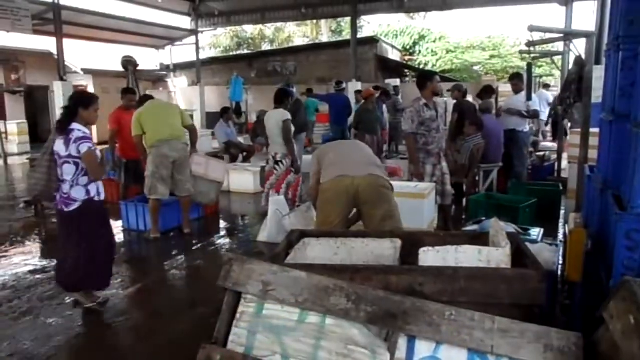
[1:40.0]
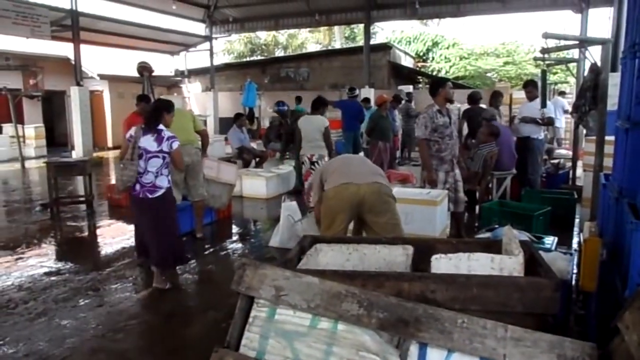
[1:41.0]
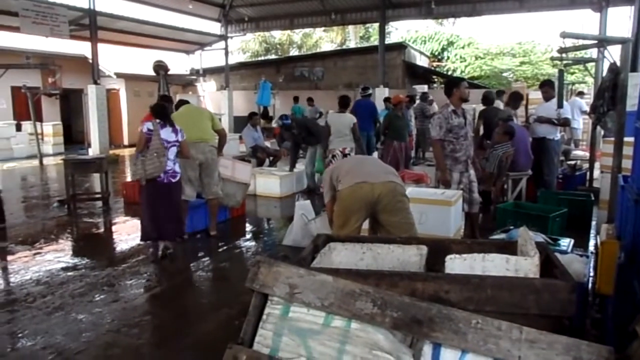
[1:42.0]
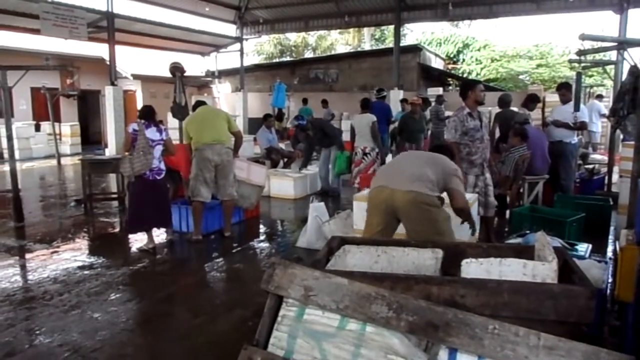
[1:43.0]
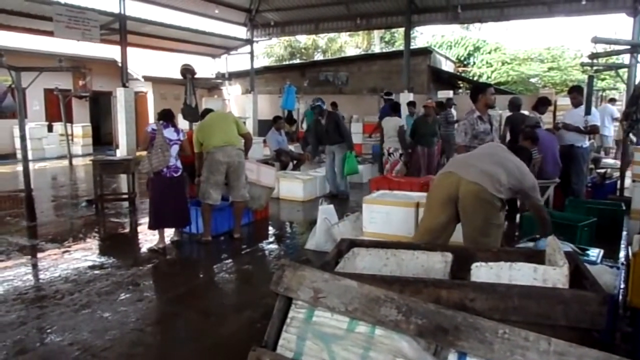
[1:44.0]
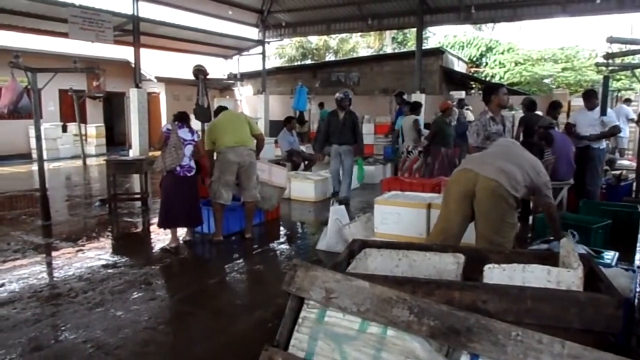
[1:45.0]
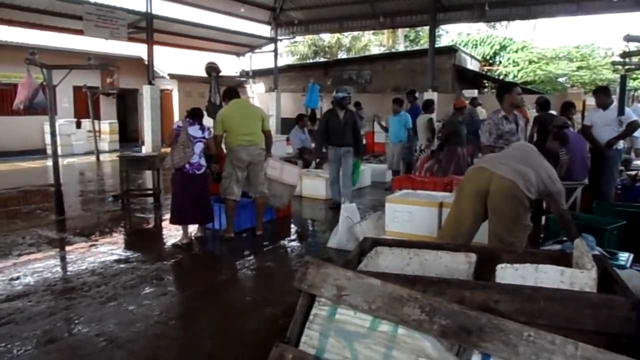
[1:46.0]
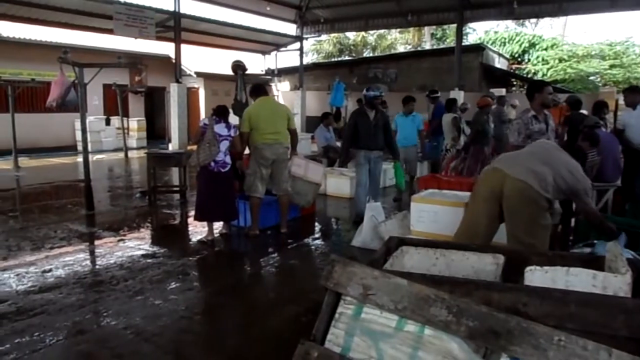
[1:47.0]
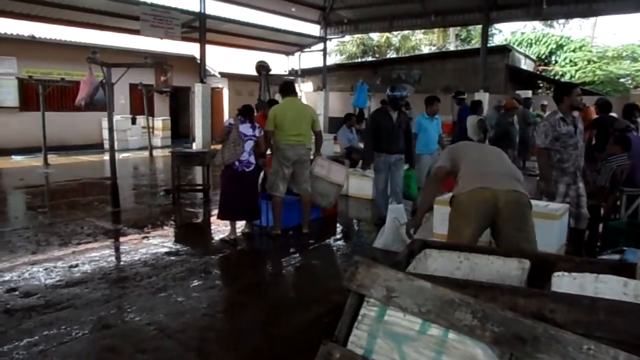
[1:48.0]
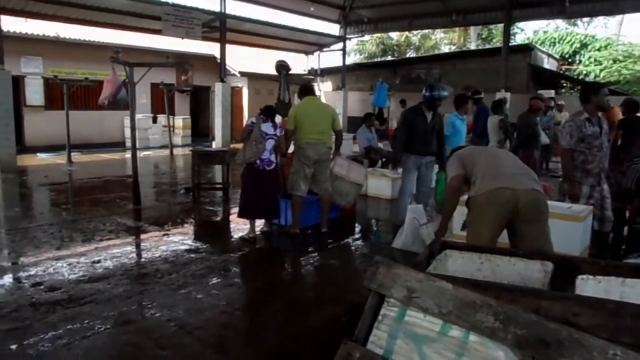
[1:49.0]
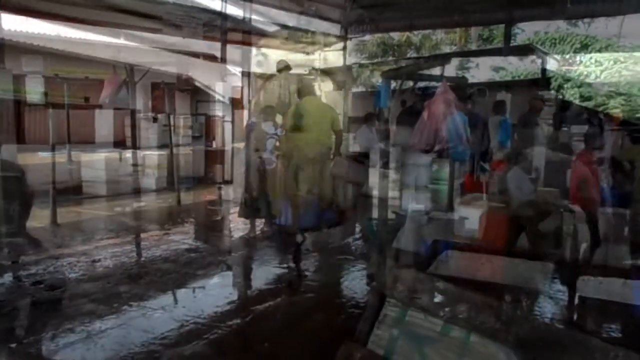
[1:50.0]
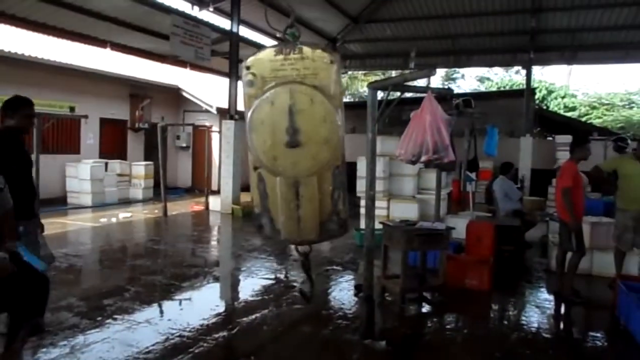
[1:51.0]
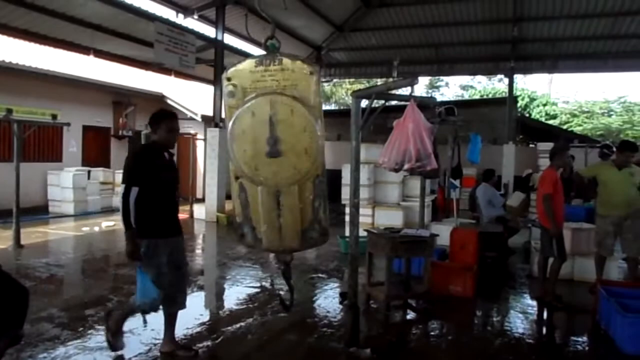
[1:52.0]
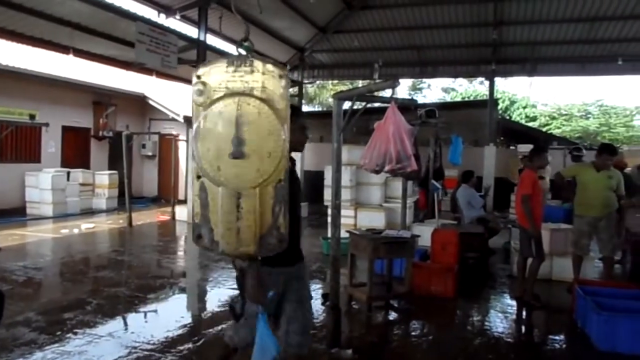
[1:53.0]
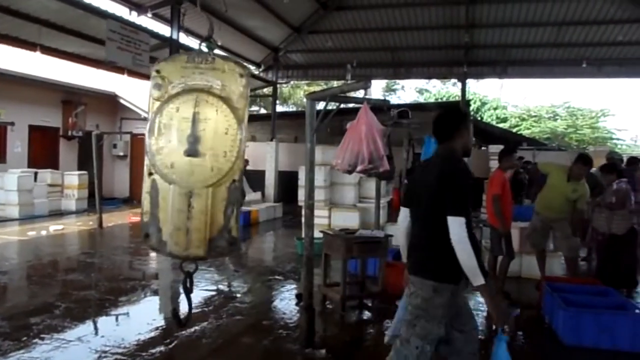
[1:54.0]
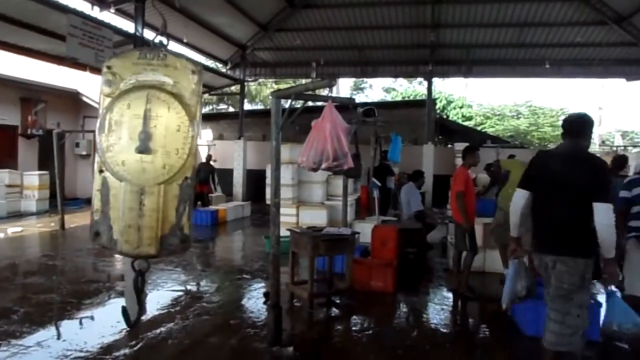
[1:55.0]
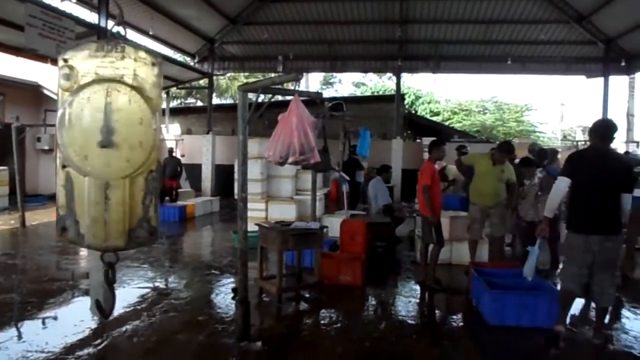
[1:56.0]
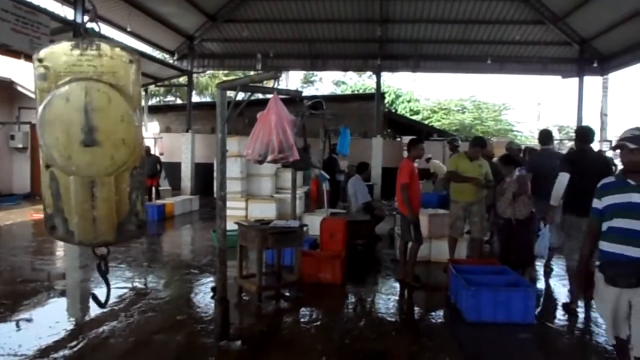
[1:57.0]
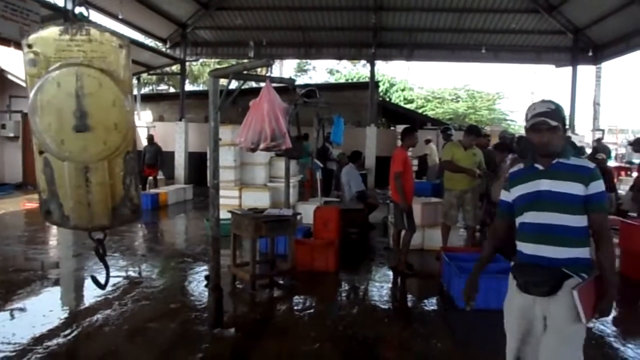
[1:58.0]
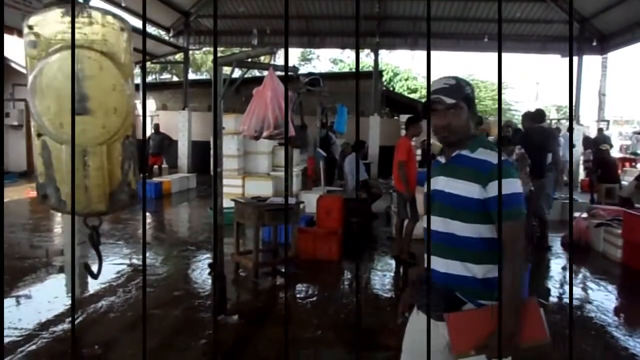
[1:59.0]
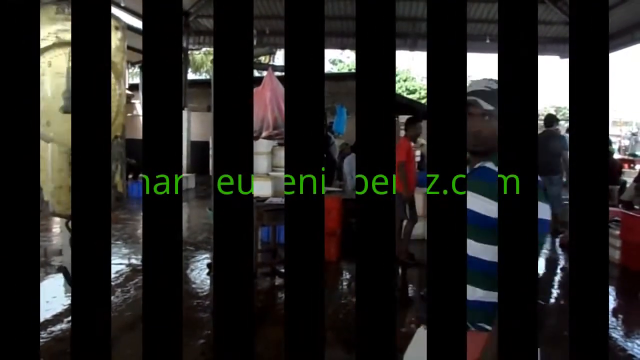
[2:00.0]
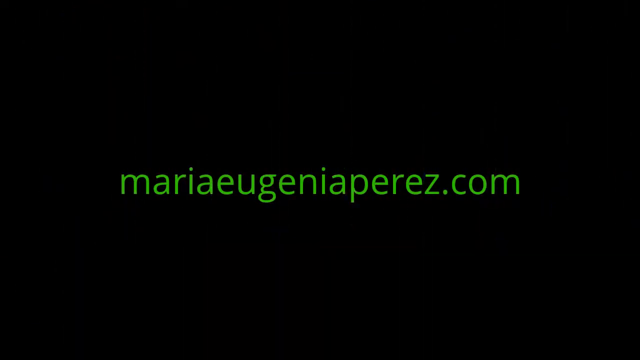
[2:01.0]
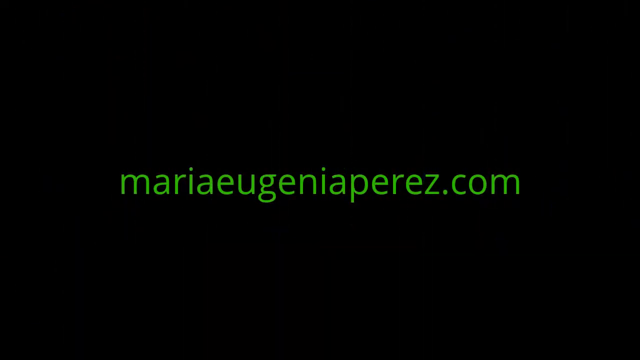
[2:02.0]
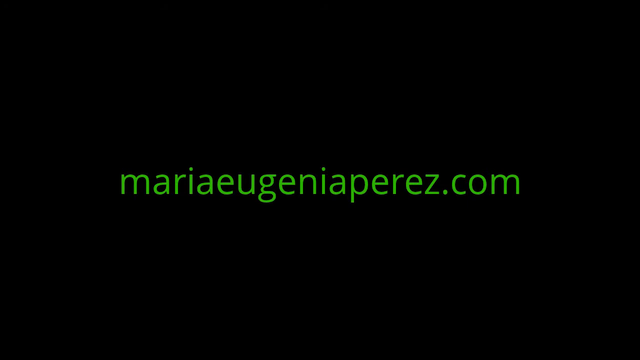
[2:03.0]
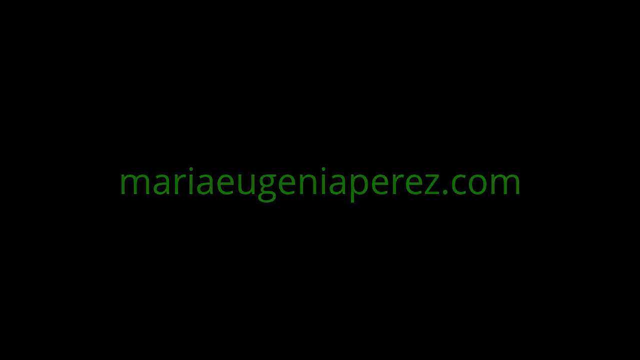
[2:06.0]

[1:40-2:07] From a different angle of the market, many more people, men and women, are under the canopy, talking to each other, walking around, looking at the dead fish and probably talking to vendors. One man is apparently organizing the bins. The scene fades to a close-up of a hanging scale with a circular dial, hanging from a little pole. It is empty and set to zero, so nothing is being weighed. A man in a navy and white striped shirt walks by almost in front of the camera, then notices the camera and tries to walk out of frame. A bar transition leads to a black screen with green text reading "MariaEugeniaPerez.com," which stays on screen for five or six seconds before fading, and the video ends.